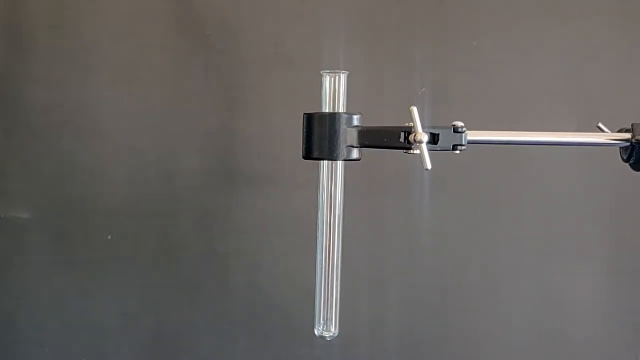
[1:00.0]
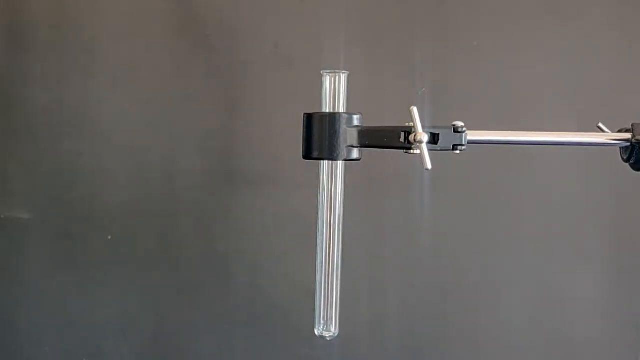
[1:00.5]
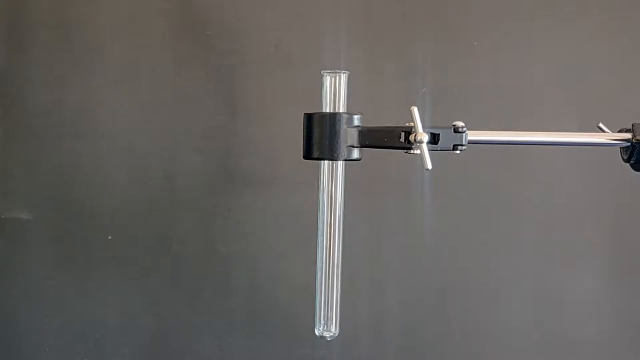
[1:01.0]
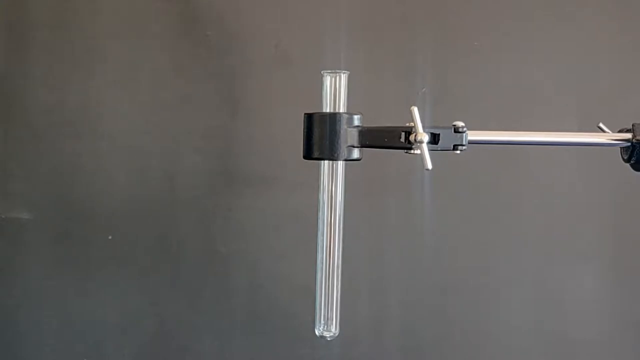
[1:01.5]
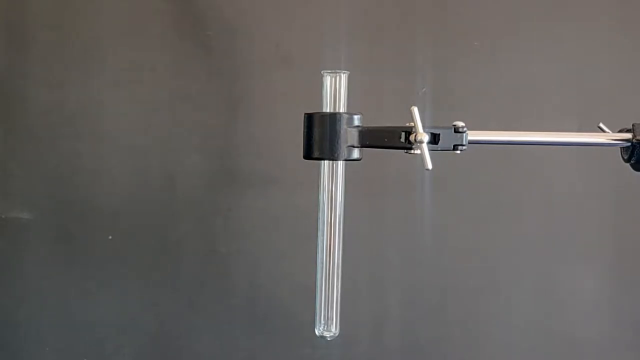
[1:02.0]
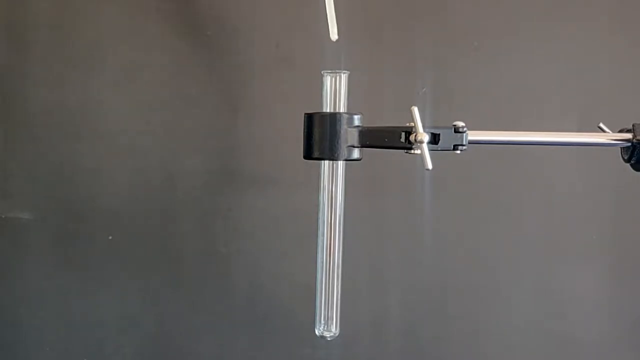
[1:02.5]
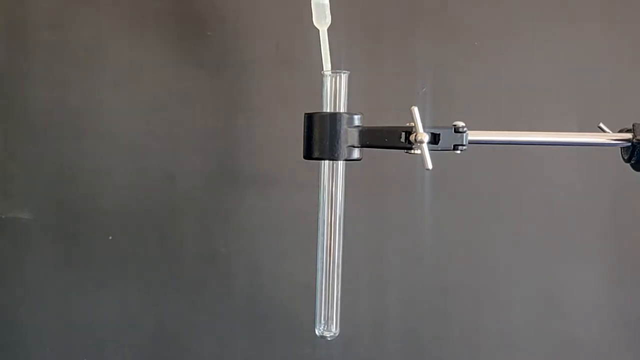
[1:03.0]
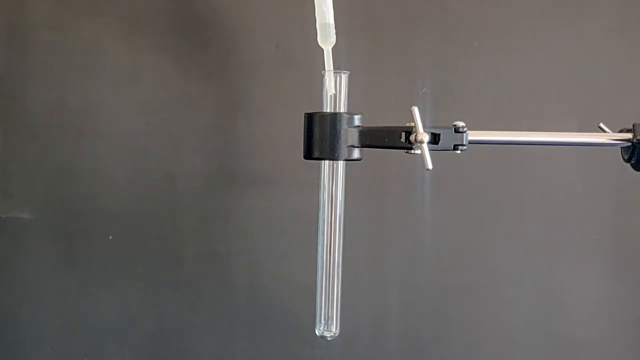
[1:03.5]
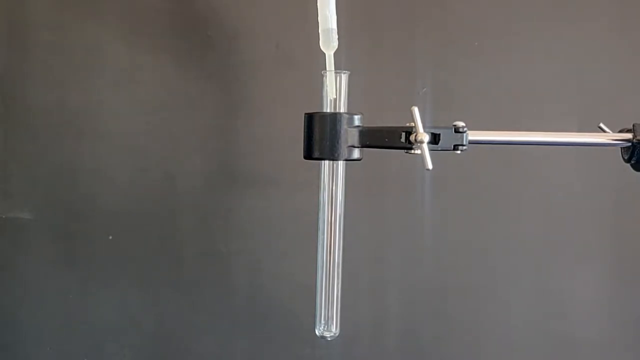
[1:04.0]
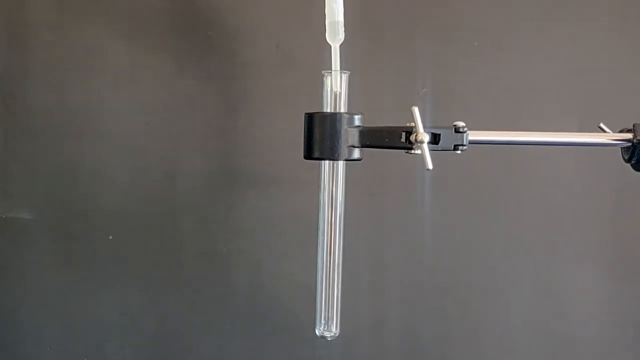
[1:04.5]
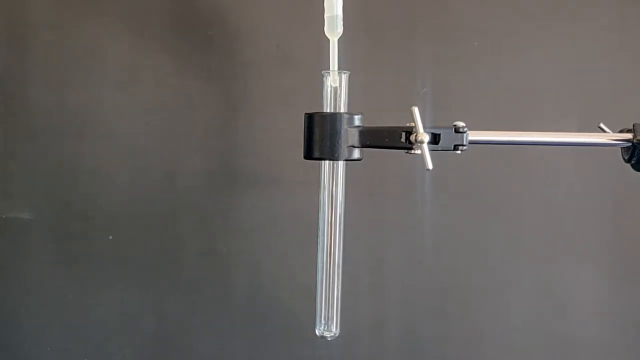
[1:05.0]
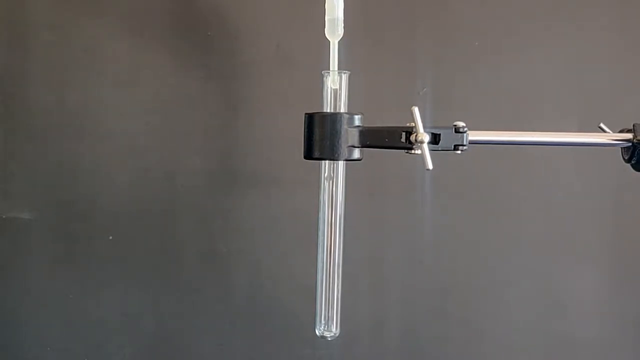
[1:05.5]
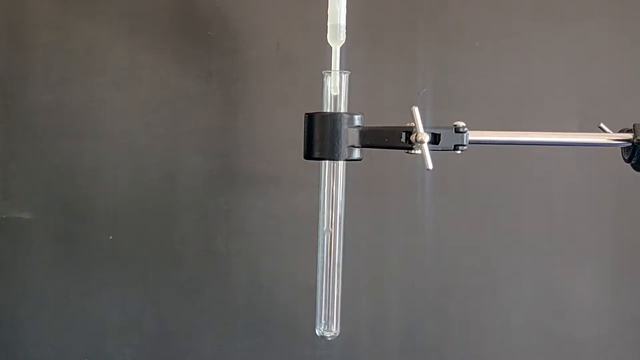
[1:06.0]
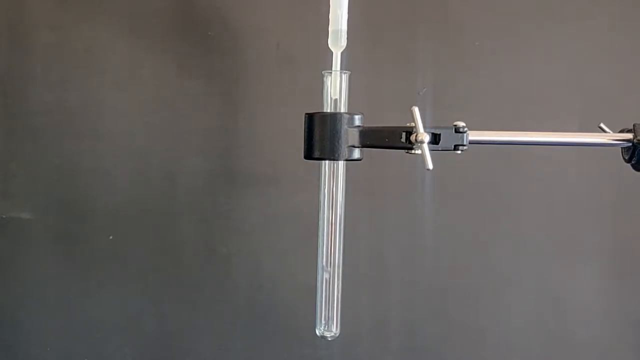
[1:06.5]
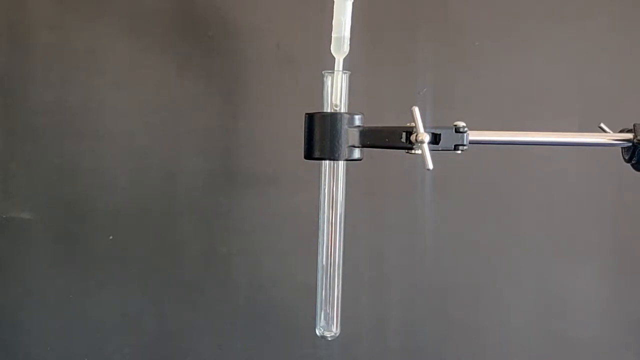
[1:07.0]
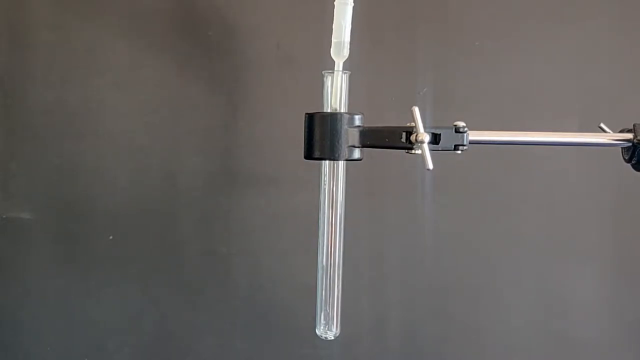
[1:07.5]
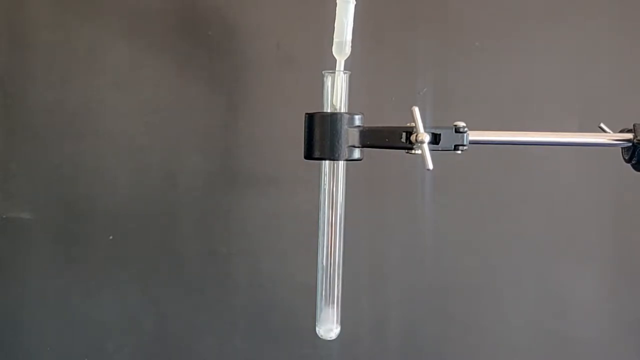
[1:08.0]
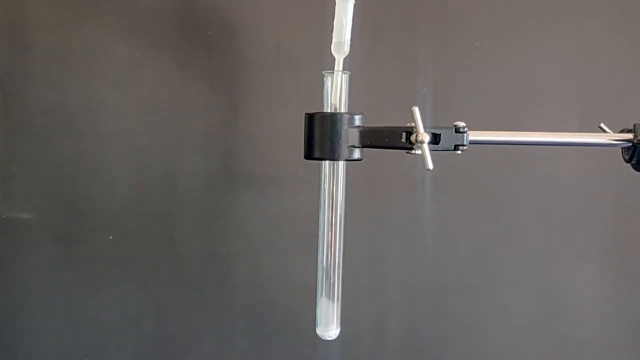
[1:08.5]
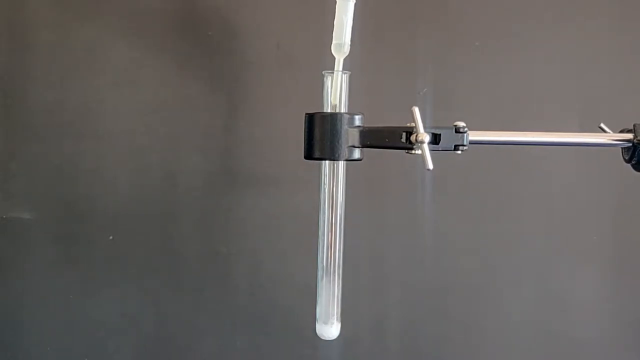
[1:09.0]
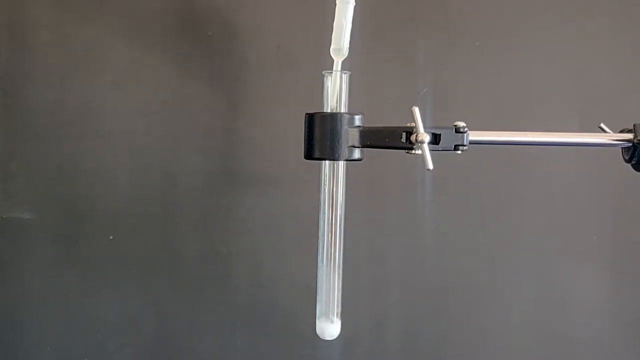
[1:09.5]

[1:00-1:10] A close-up shows what appears to be a test tube held by a mechanical arm. The arm's grip is black, with hinges at three points and a tightening bar, and a silver bar extends from it to the right. The tip of a bulb dropper enters the frame from the top at the opening of the test tube, extends down into it and begins dropping clear liquid. The test tube begins to fill up from the bottom with the clear liquid, and there also appears to be some gas in it.